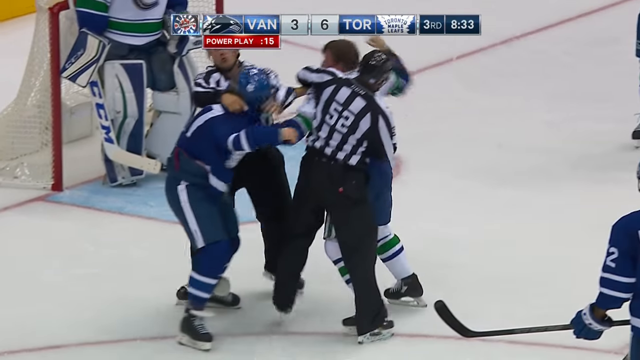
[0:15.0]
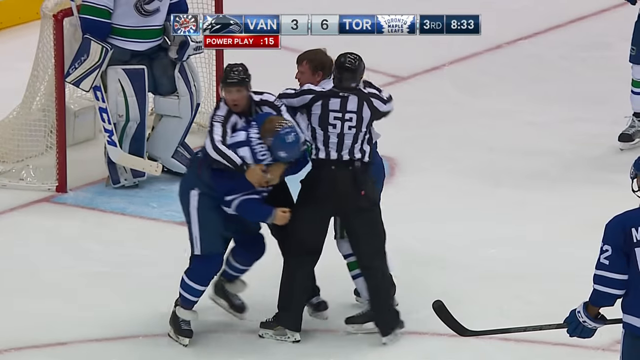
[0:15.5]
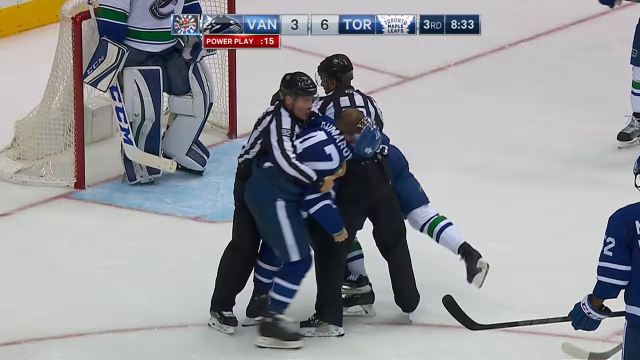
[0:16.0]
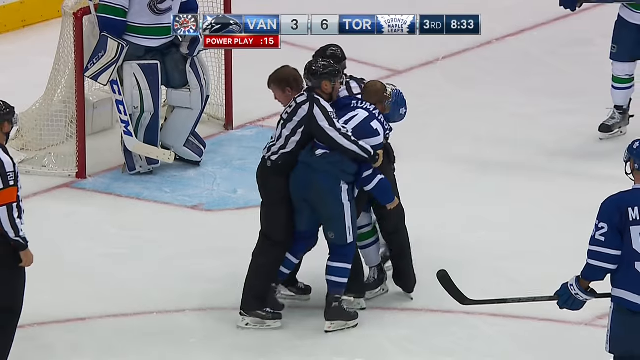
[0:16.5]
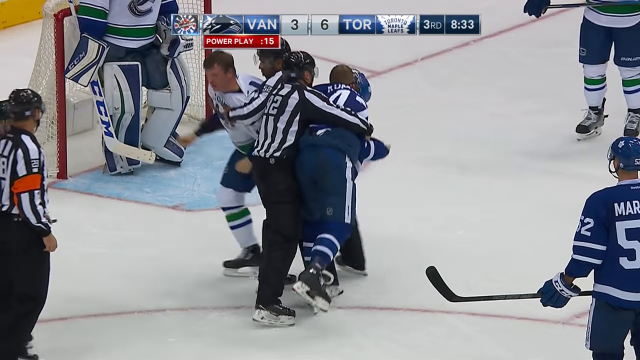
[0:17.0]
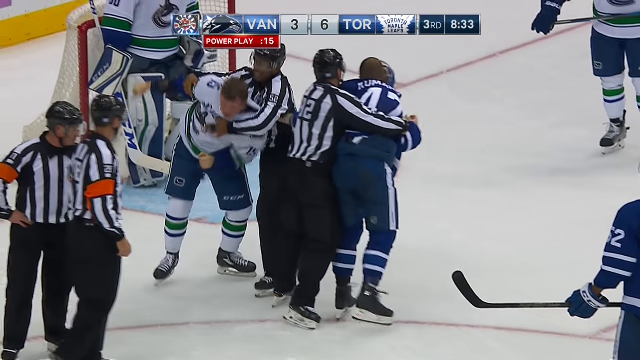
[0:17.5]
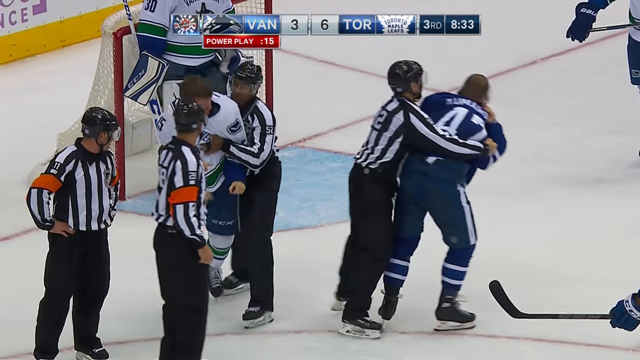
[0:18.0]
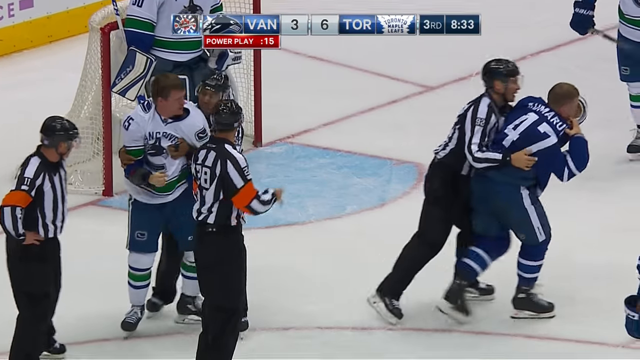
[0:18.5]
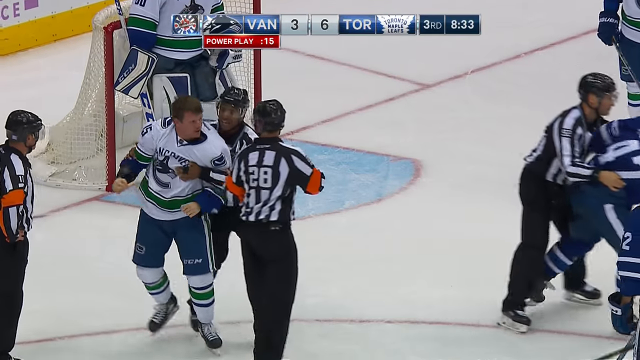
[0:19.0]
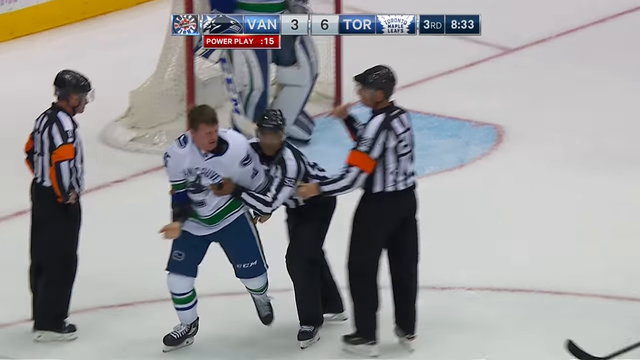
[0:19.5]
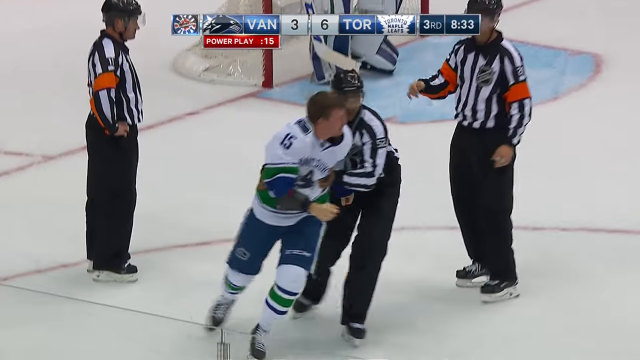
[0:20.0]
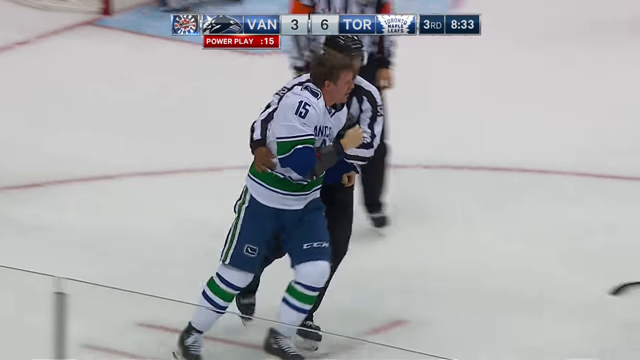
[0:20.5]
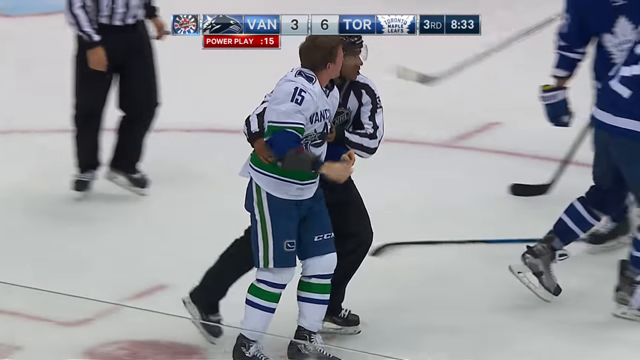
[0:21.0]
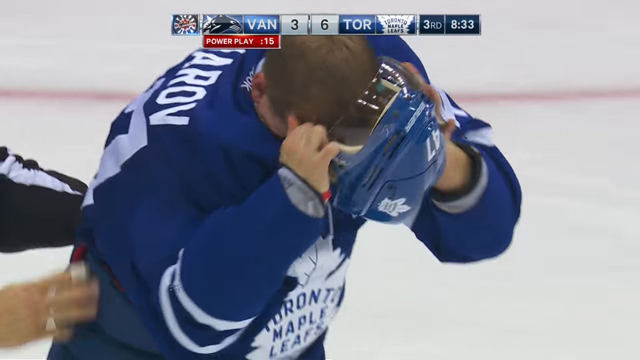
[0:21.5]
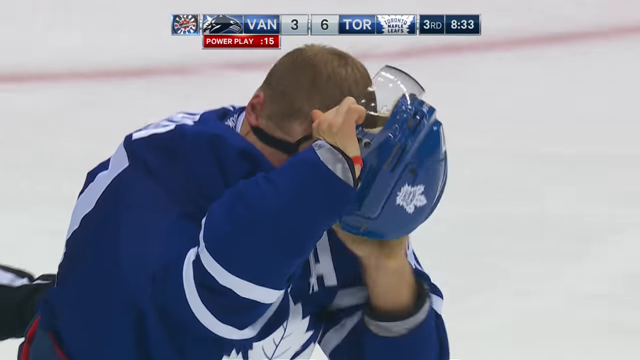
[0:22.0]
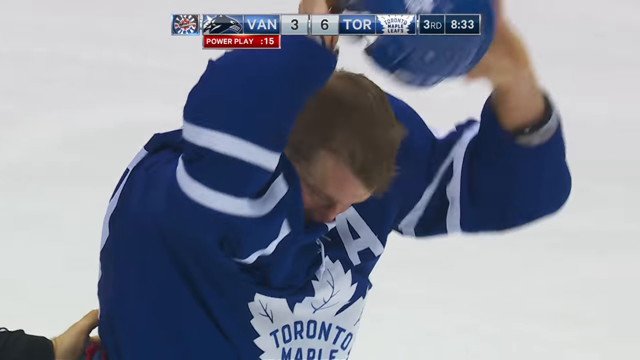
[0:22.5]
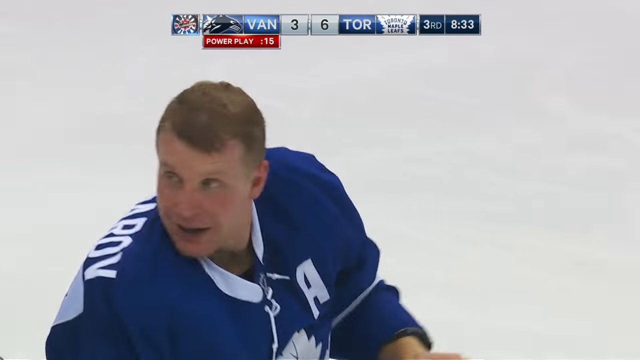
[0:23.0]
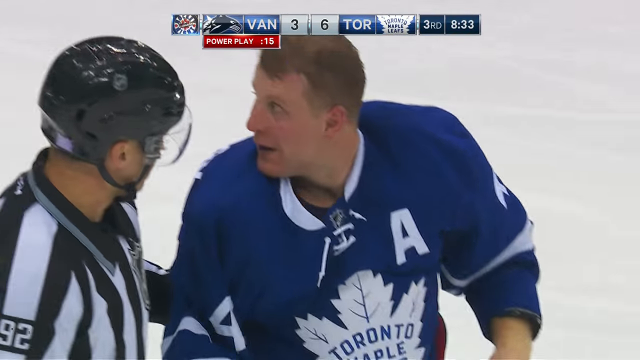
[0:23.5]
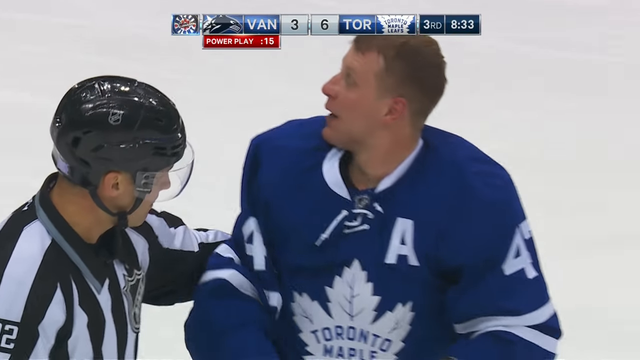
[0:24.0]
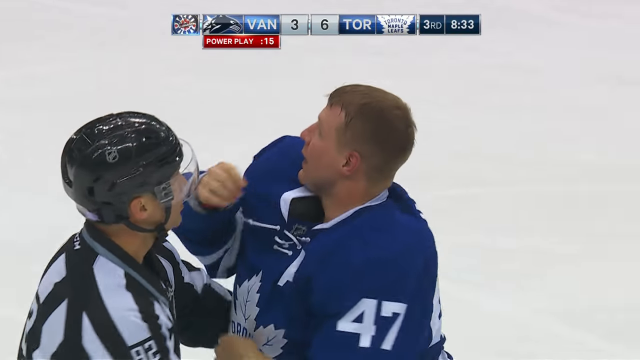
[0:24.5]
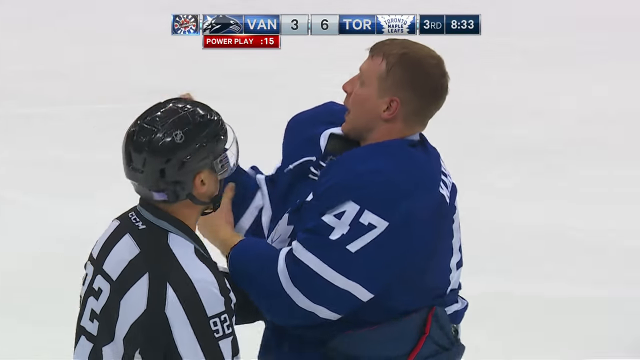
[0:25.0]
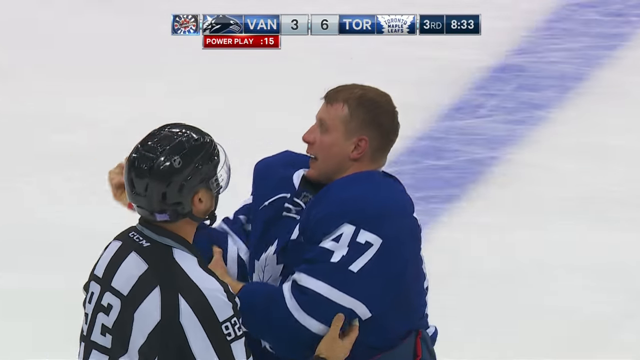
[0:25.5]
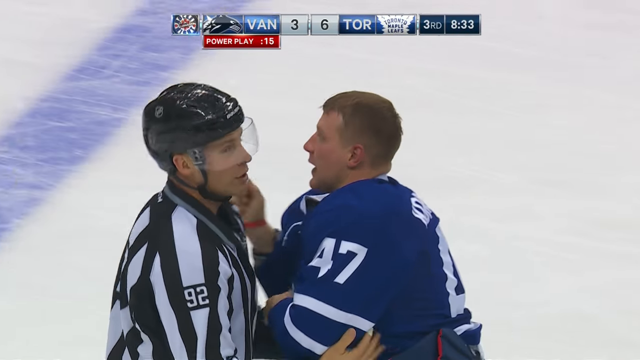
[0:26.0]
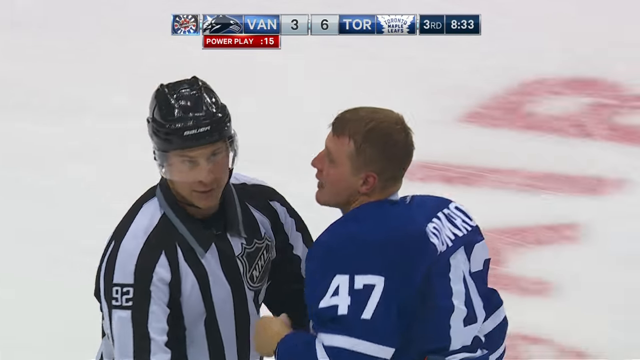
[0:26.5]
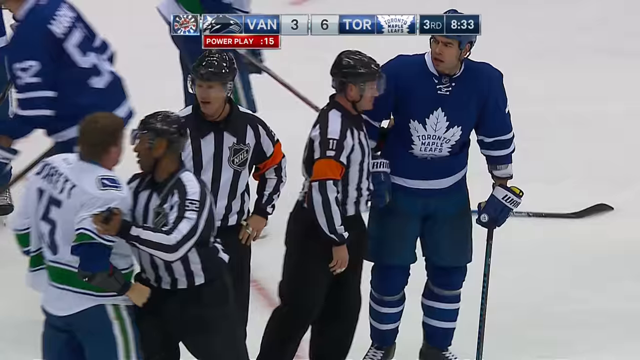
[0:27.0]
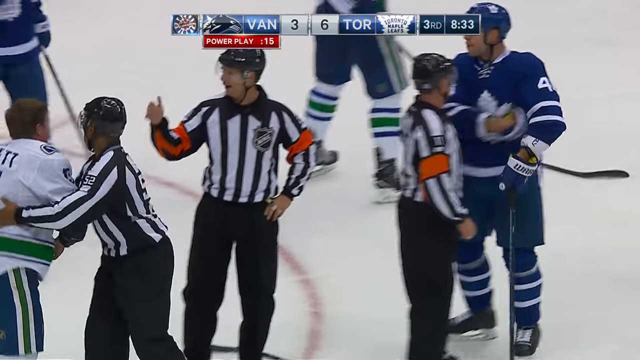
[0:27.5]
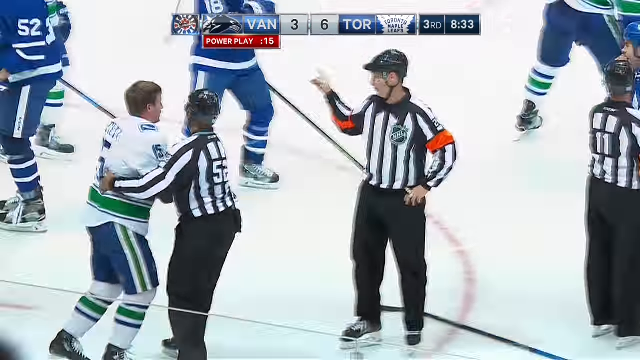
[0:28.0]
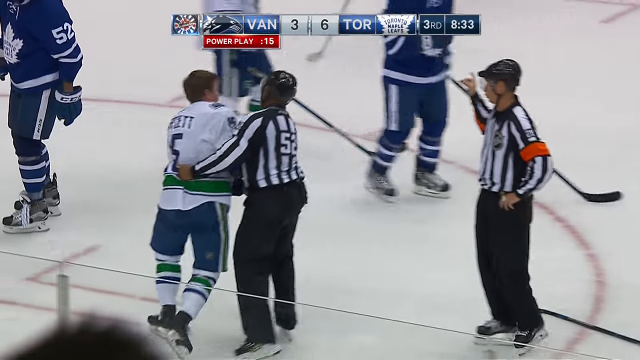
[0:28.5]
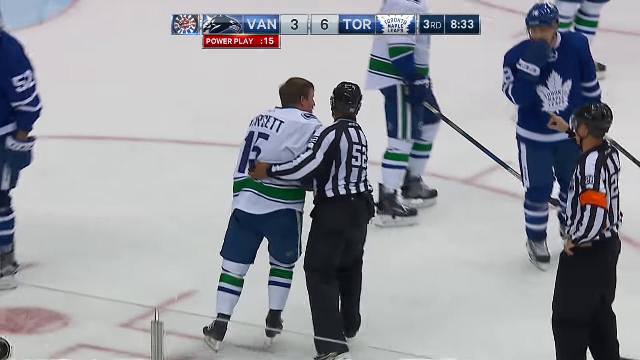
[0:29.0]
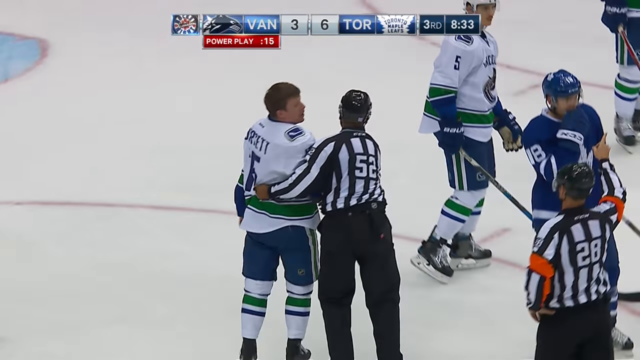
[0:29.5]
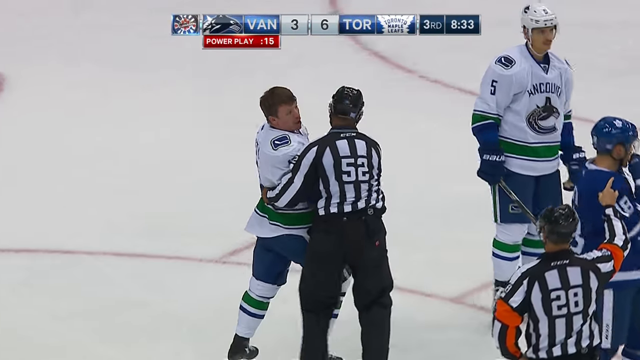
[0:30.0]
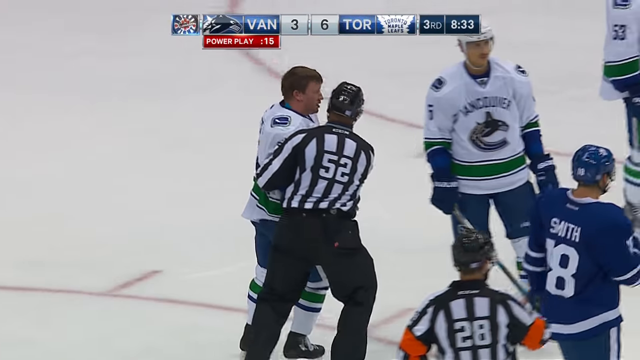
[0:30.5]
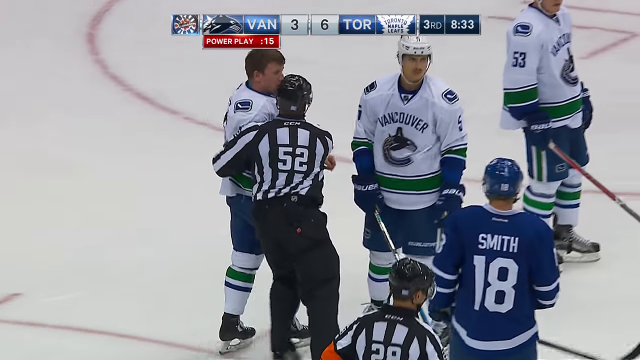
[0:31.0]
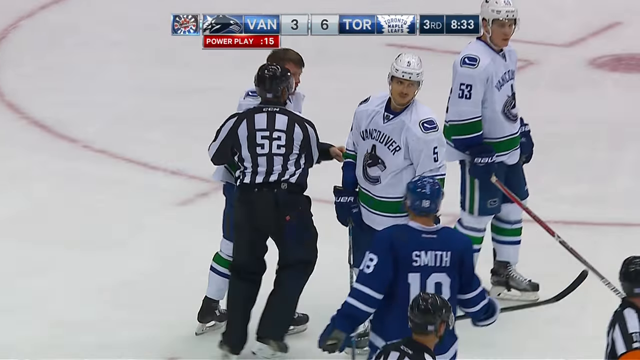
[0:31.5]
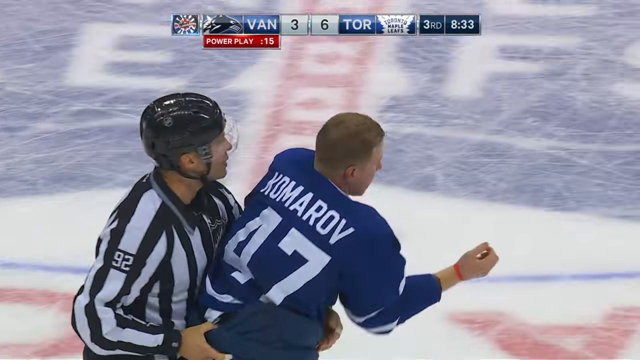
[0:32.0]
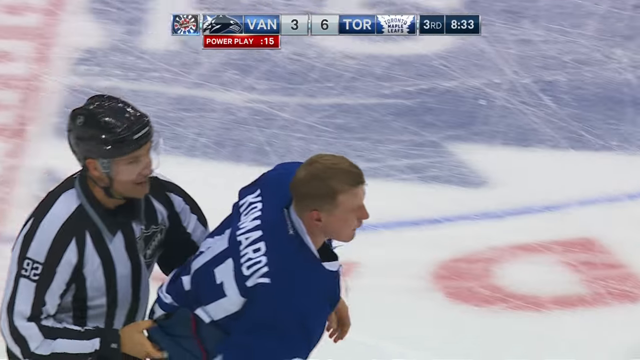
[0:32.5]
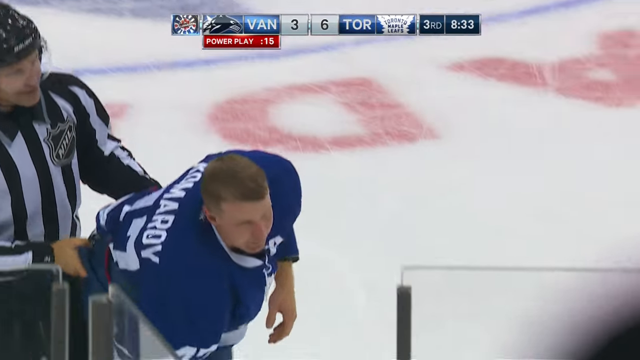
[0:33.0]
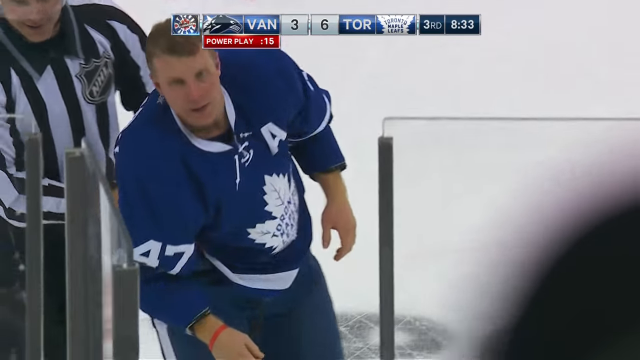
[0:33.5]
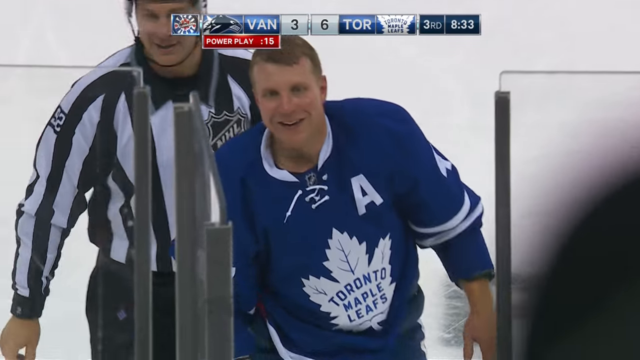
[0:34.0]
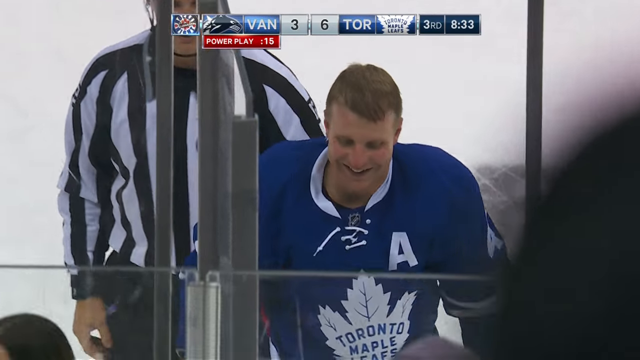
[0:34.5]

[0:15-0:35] The fight continues. A referee skates with the Vancouver player in the white jersey, who seems to be trying to get to the Toronto player in blue, but the referee holds him back. Two other referees stand in place, not skating, watching and waiting. A referee holds back a player in the blue jersey who plays for Toronto and guides him to the penalty box. He has no helmet on, having taken it off, and he is smiling as he is put into the penalty box. The score is six to three Toronto over Vancouver, in the third quarter, and the time is 8:33. On screen it says "power play 15 seconds". The other players just stand around skating slowly, not sure what to do. A small logo reading "SN" is in the bottom right-hand corner. The ice is white with blue logos on the rink, and Canadian advertisements line the railing of the rink.